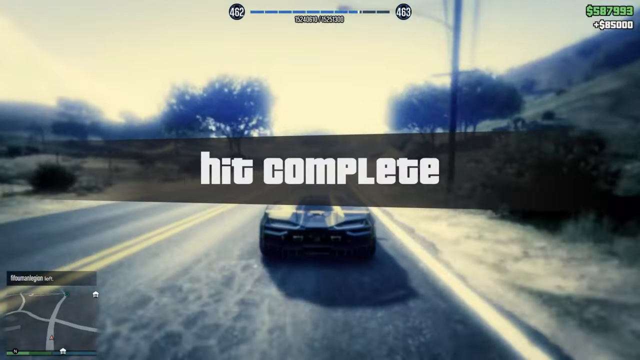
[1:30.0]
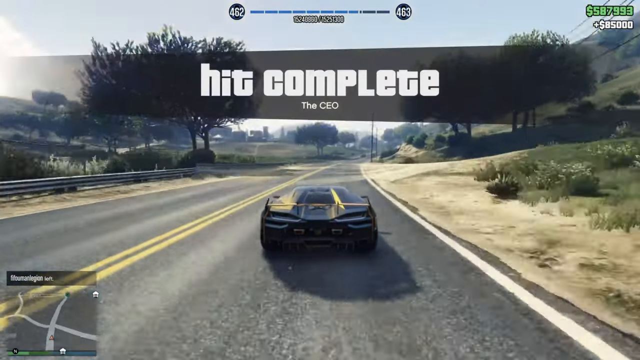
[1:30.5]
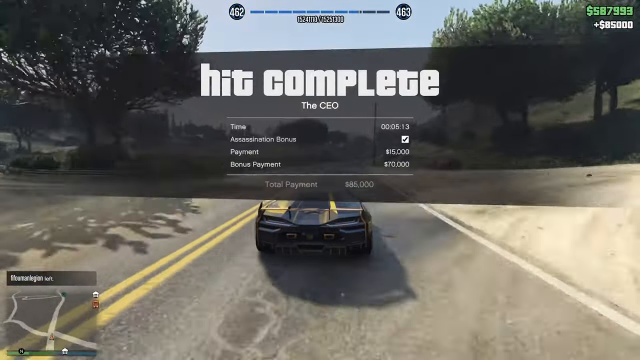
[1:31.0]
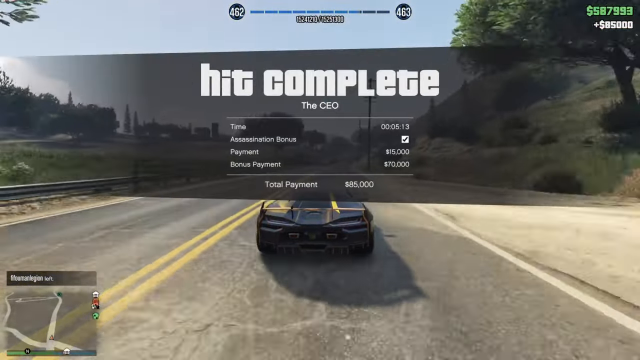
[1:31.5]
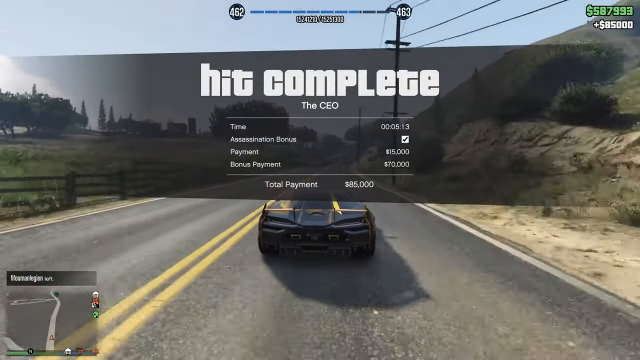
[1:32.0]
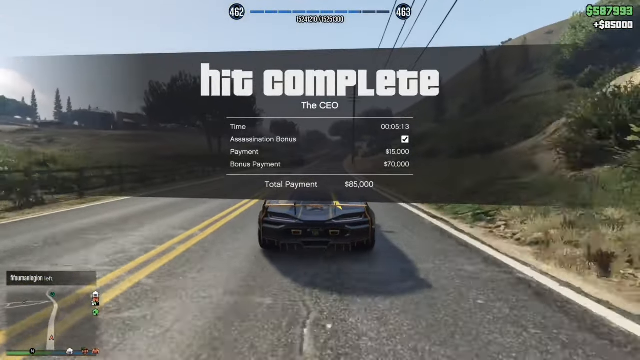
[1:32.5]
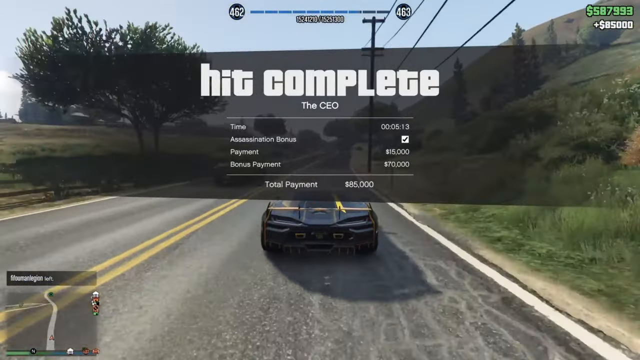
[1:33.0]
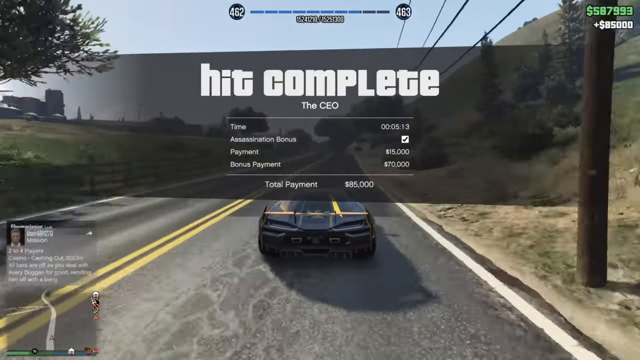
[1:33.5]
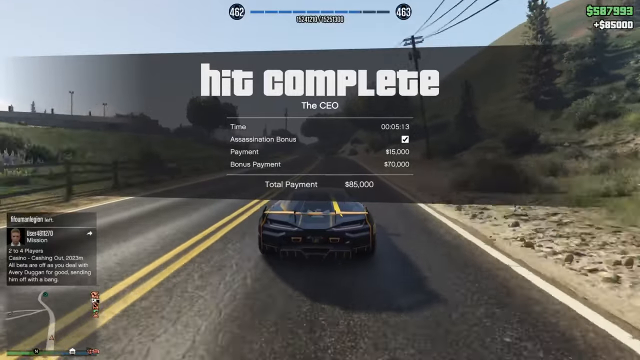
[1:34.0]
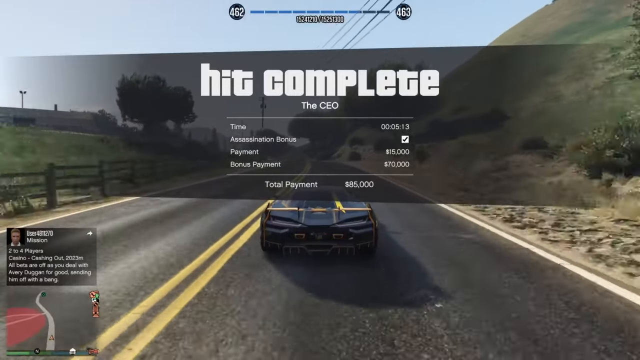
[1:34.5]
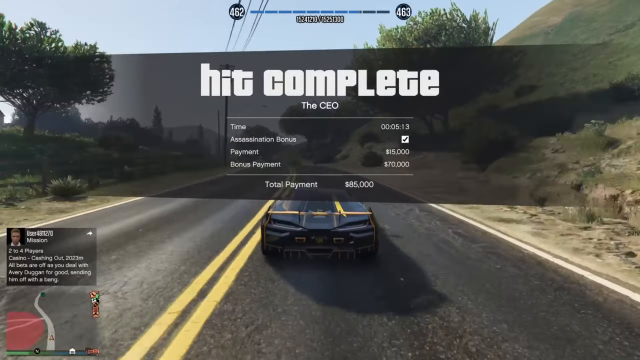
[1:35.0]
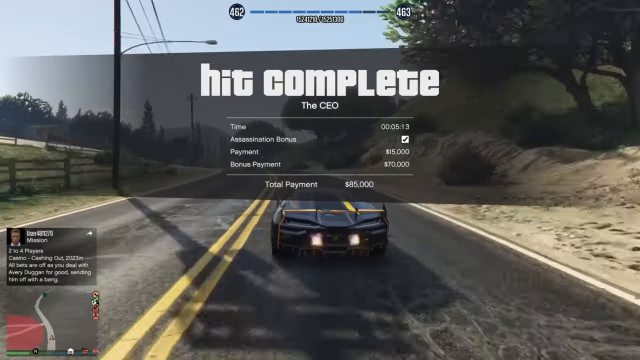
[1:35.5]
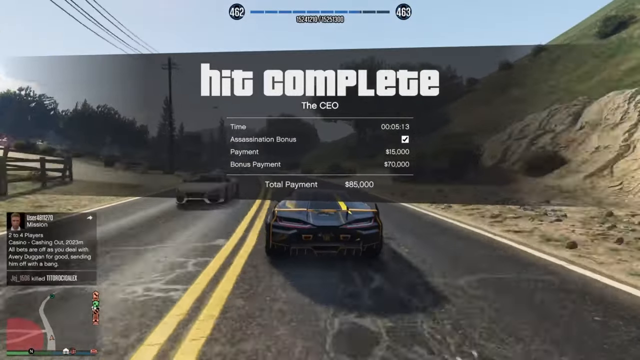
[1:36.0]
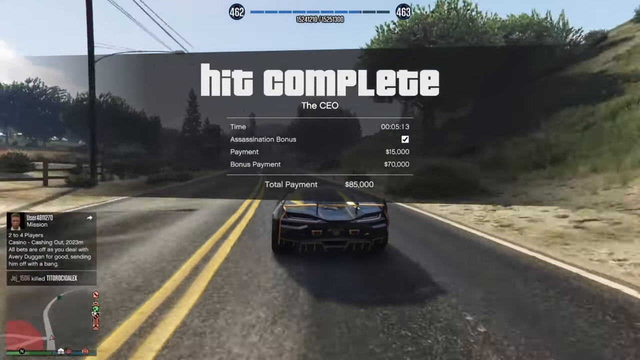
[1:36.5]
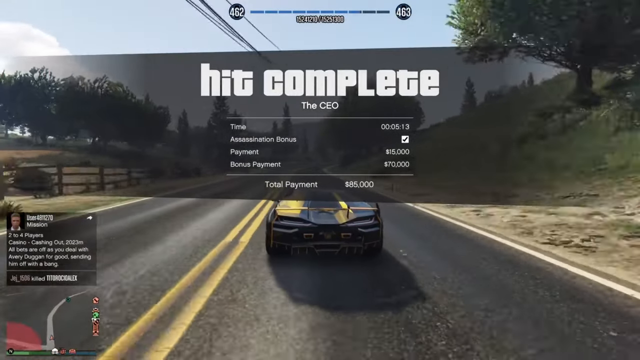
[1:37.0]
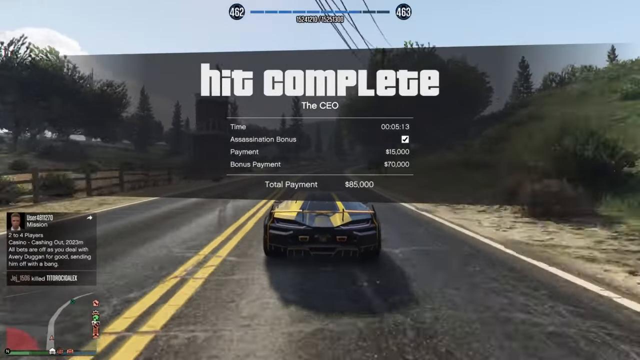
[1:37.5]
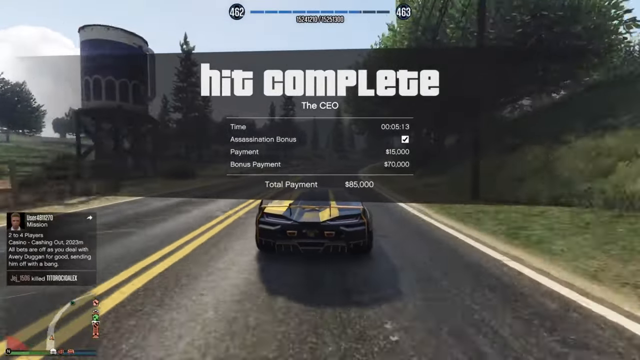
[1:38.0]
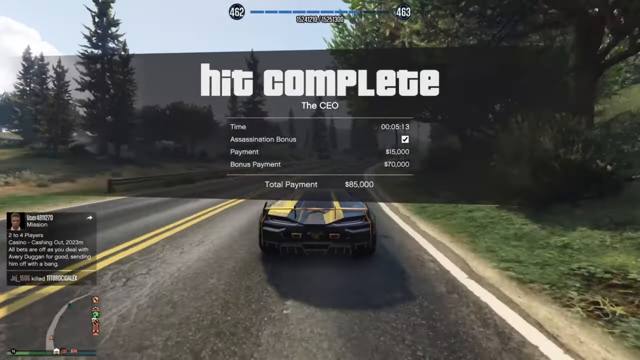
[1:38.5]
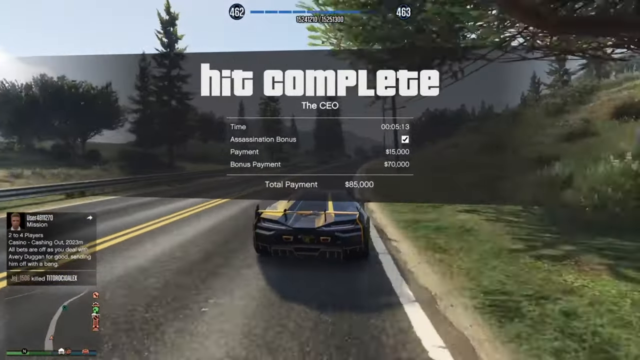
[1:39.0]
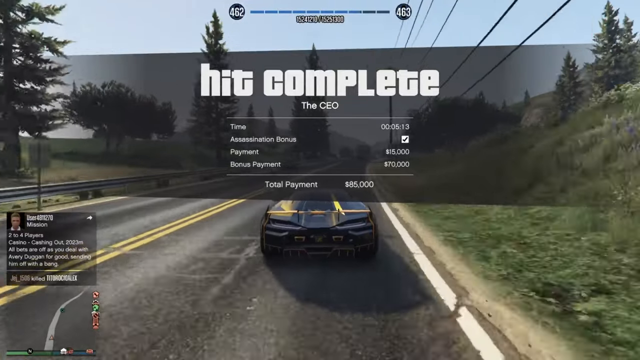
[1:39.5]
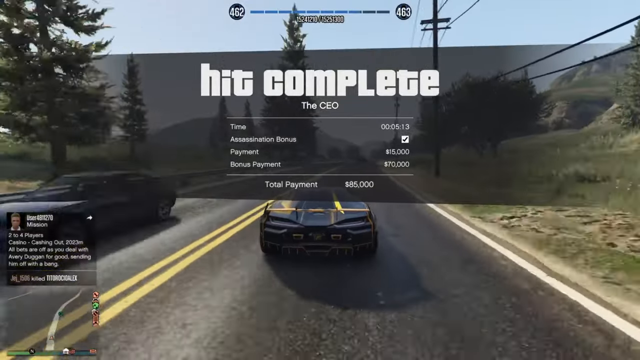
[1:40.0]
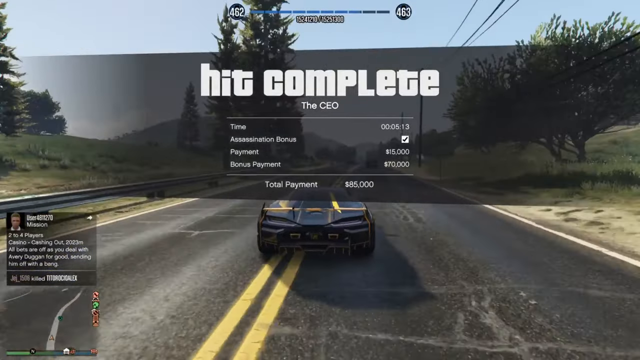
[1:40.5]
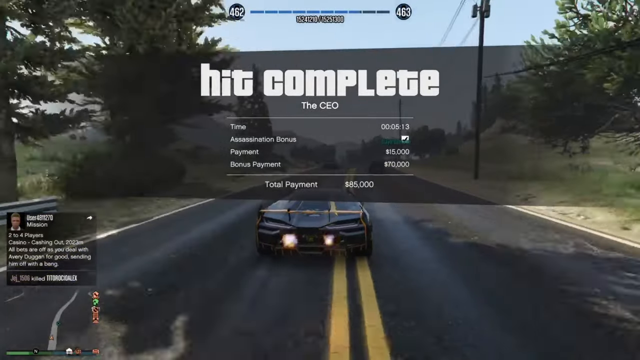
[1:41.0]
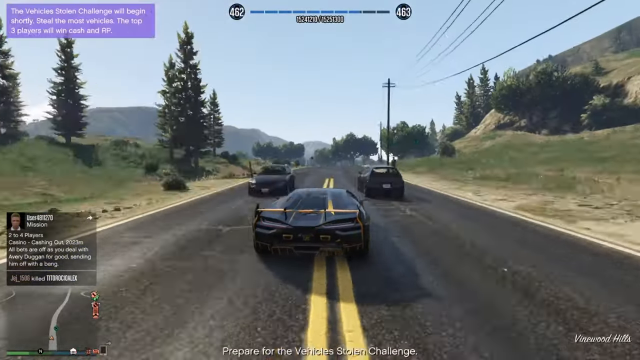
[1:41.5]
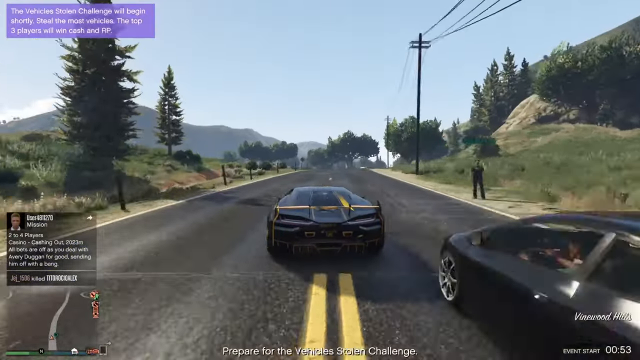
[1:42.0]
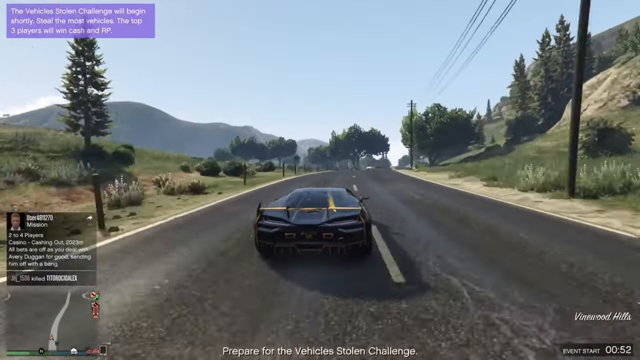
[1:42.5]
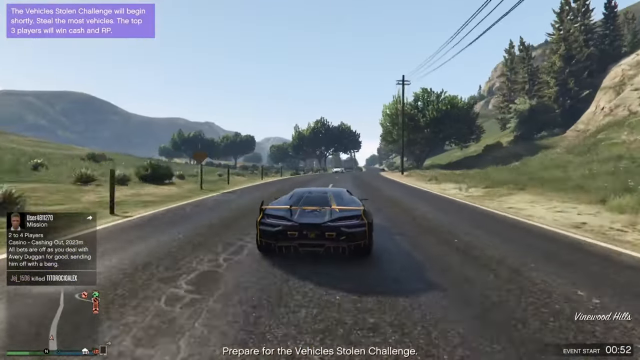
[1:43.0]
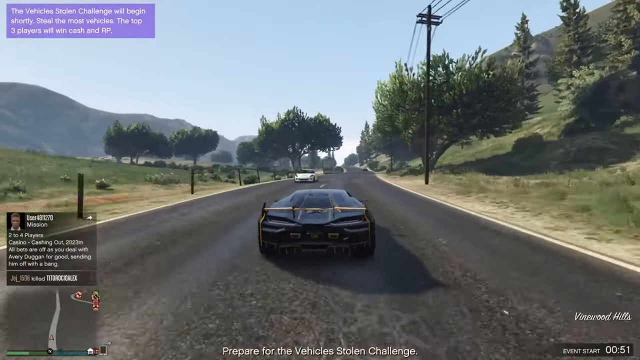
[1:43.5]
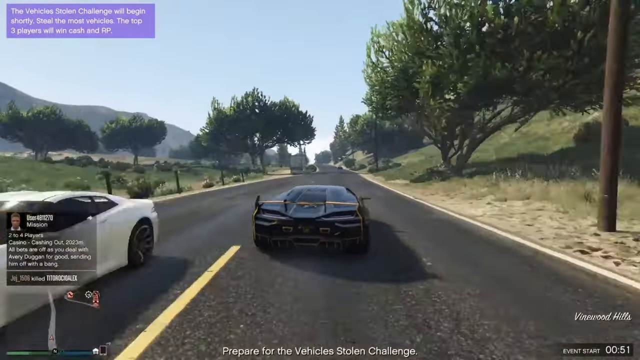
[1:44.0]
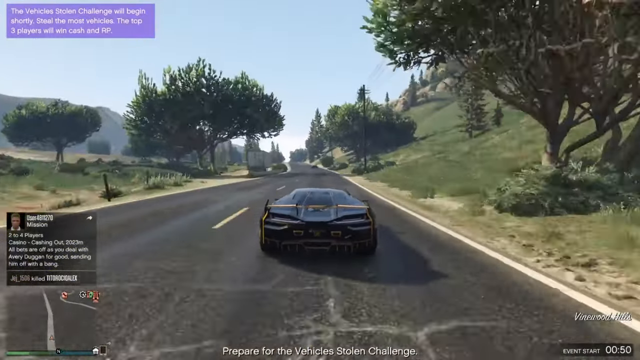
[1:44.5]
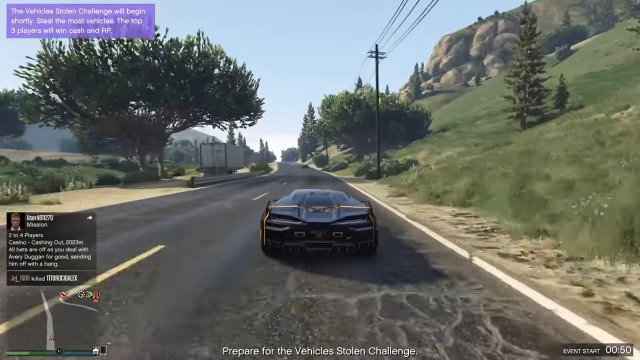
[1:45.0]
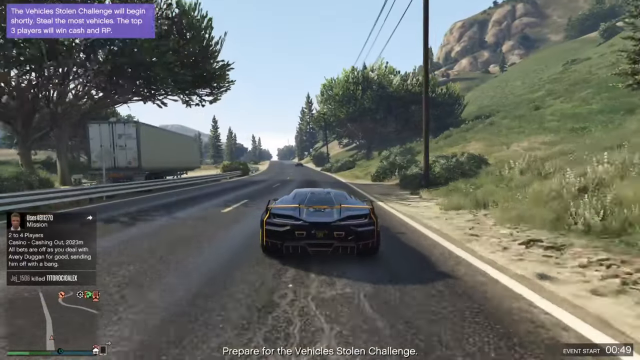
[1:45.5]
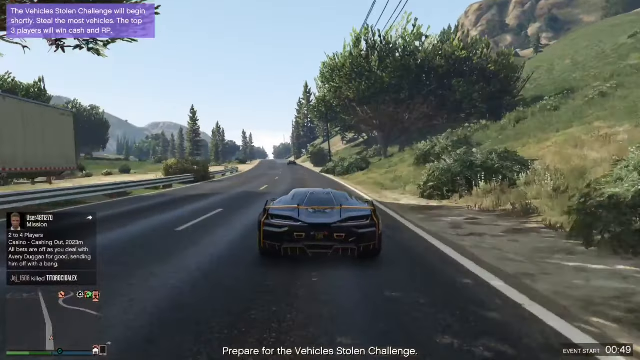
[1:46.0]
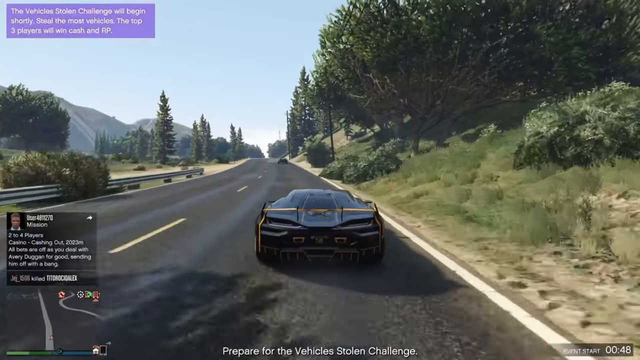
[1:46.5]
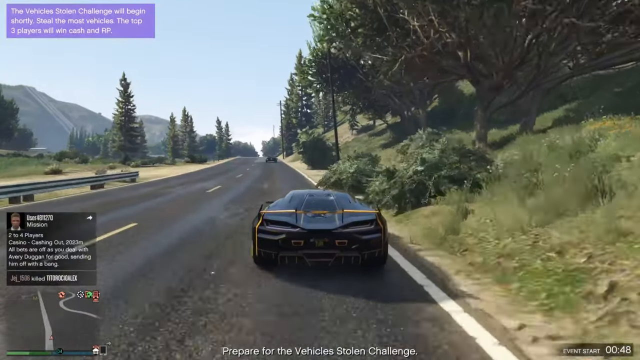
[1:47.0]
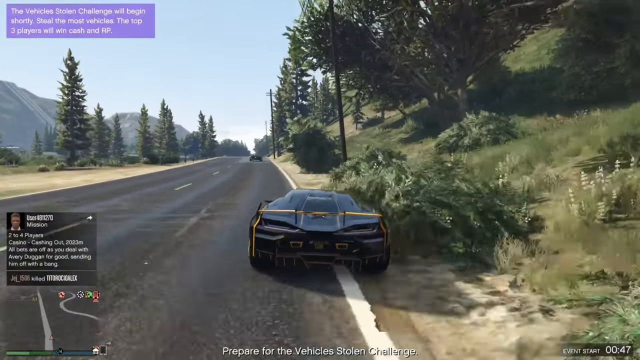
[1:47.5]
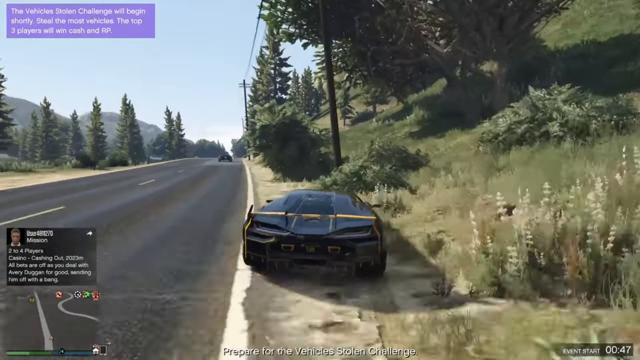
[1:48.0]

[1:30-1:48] A large message in the middle of the screen in the video game says "hit complete" in white, bold text. Below it, in smaller text, it says "the CEO," followed by what seem to be stats for the completed mission. "Time" is five minutes, 13 seconds. Under that is "assassination bonus," with a black check mark on the right indicating the bonus was earned. Below that, "payment" is apparently $15,000, and the last item, "bonus payment," is $70,000. Below that, in a boxed area, "total payment" is $85,000. The 85,000 is then added to the person's currency at the top right. The person rides down the road very quickly in the black and yellow car, swerving past a bunch of cars going both toward and away from him. The sides of the road are very green, with a lot of very green trees. It is daytime, with a bright blue sky and not many clouds, and the sun is not visible. He stops the vehicle on the side of the road before the video ends.